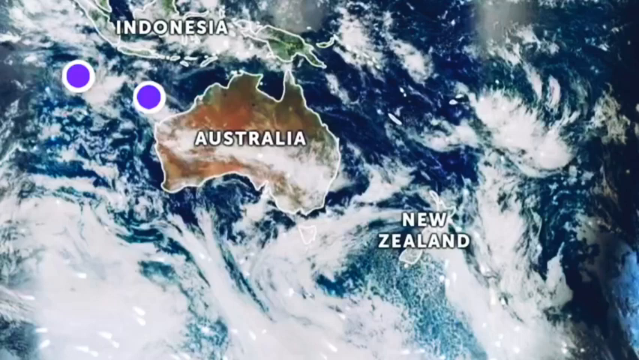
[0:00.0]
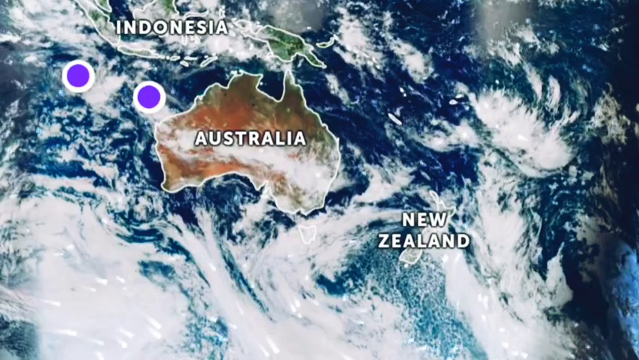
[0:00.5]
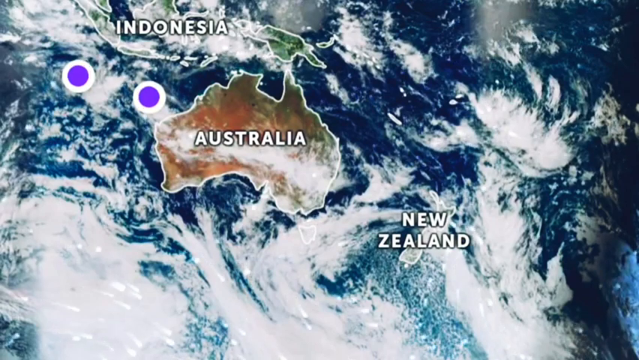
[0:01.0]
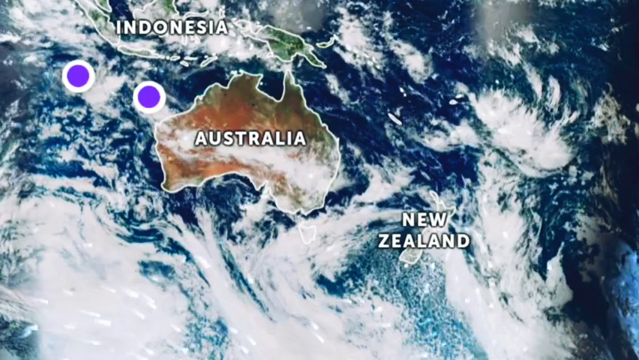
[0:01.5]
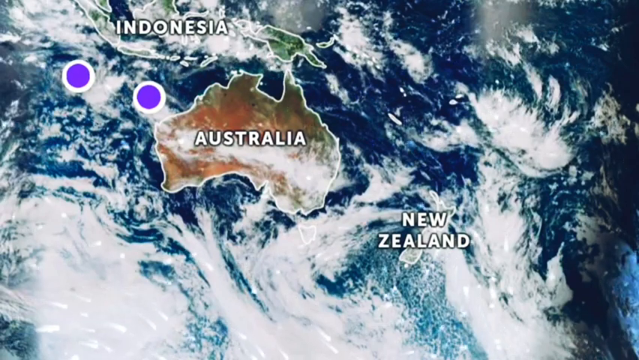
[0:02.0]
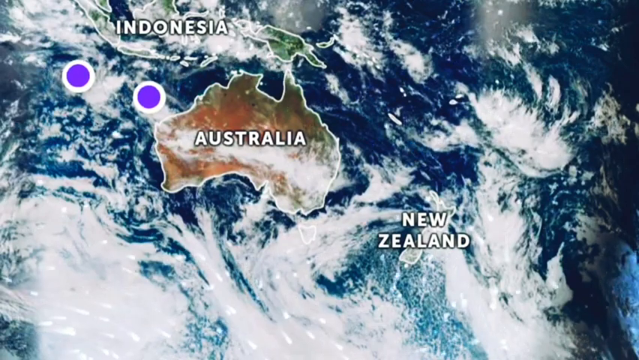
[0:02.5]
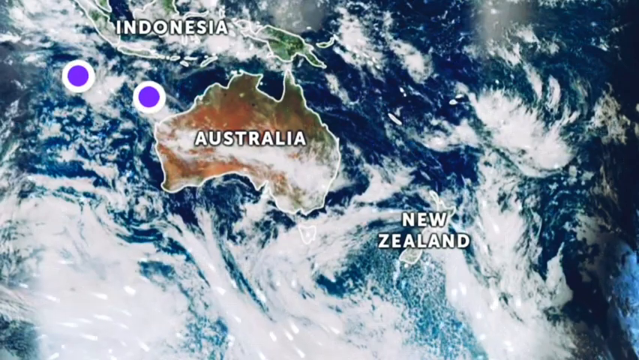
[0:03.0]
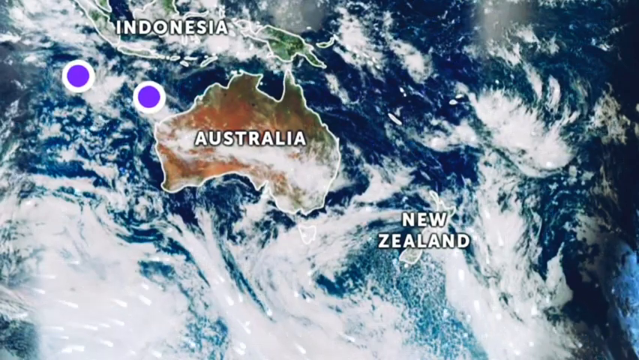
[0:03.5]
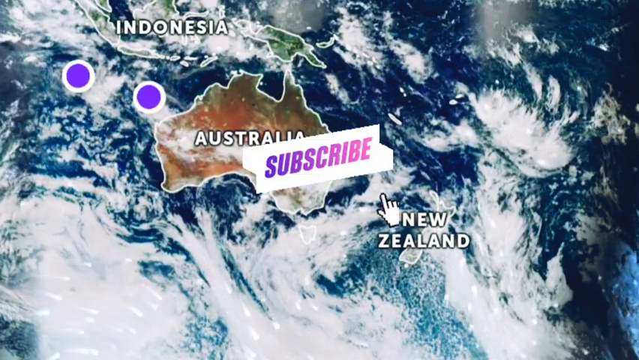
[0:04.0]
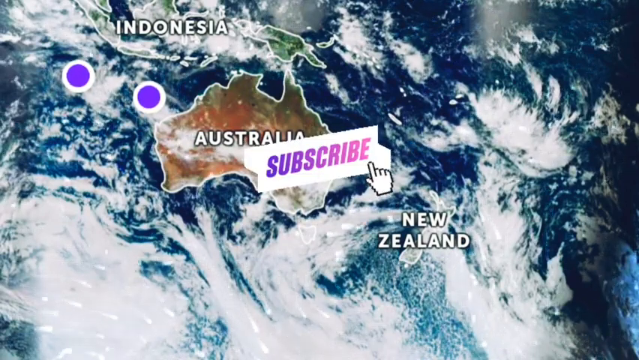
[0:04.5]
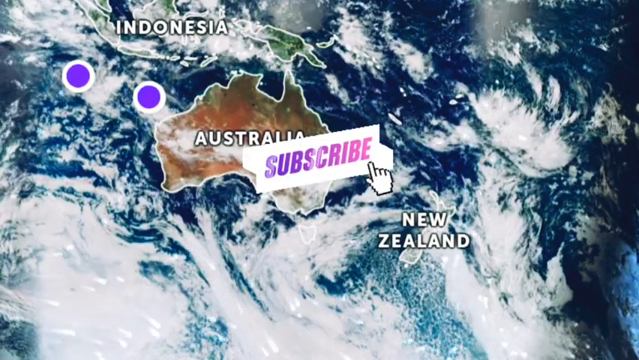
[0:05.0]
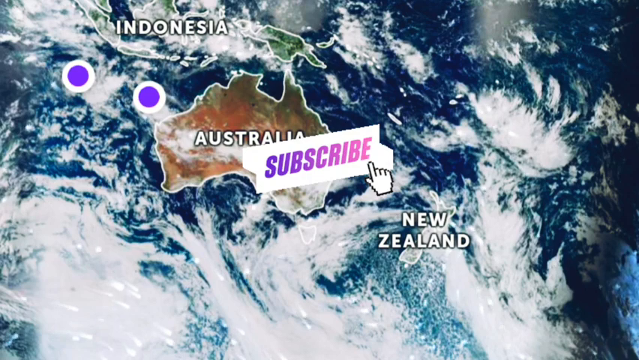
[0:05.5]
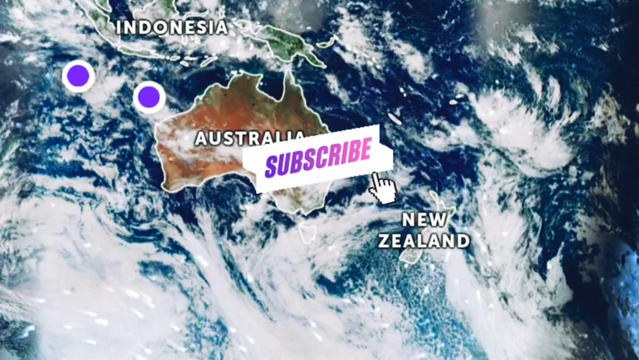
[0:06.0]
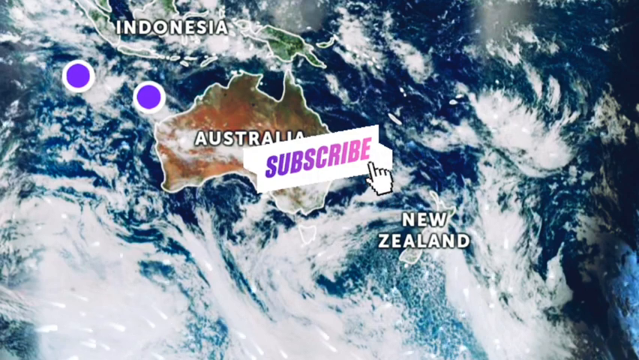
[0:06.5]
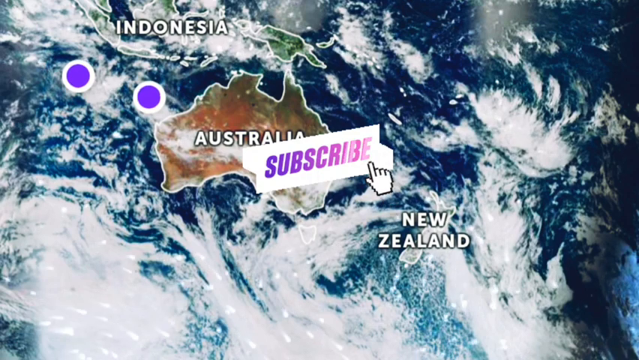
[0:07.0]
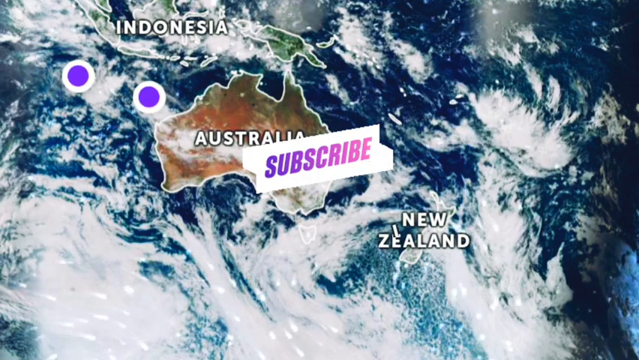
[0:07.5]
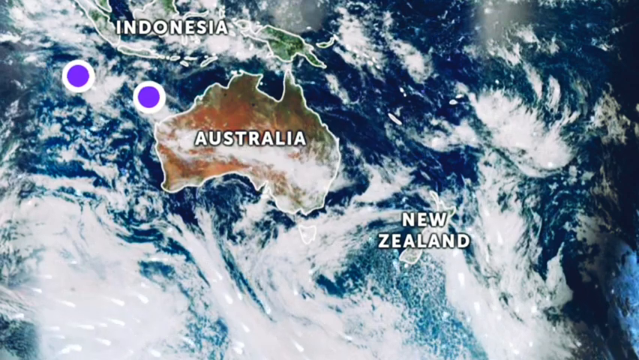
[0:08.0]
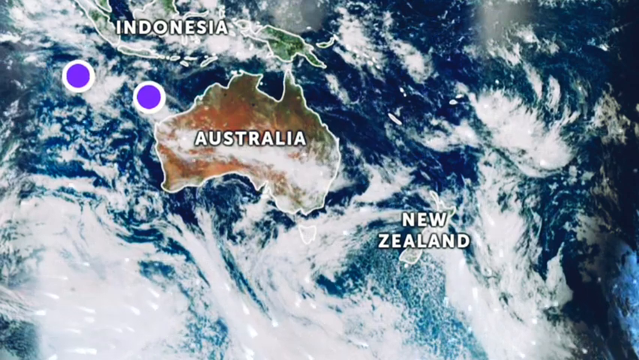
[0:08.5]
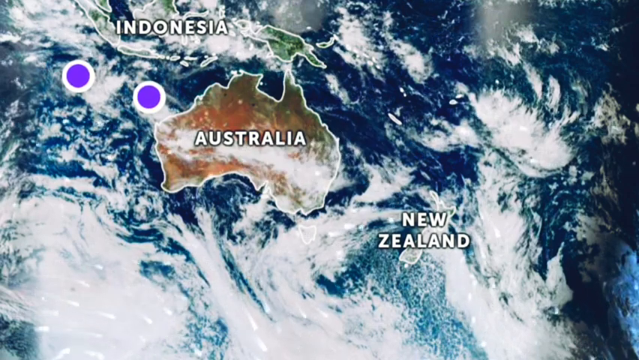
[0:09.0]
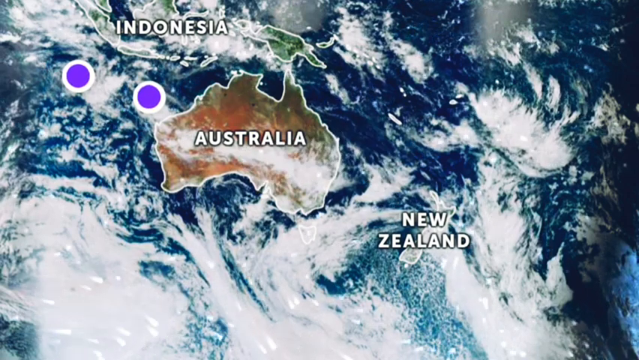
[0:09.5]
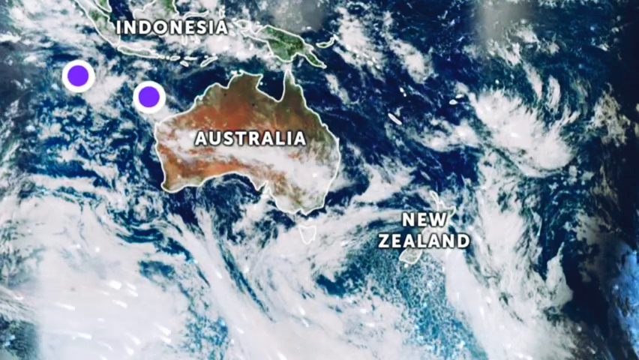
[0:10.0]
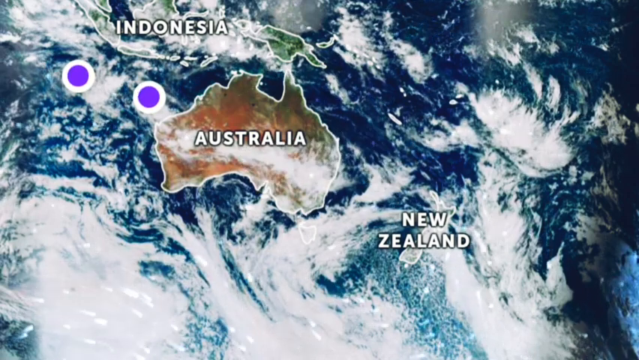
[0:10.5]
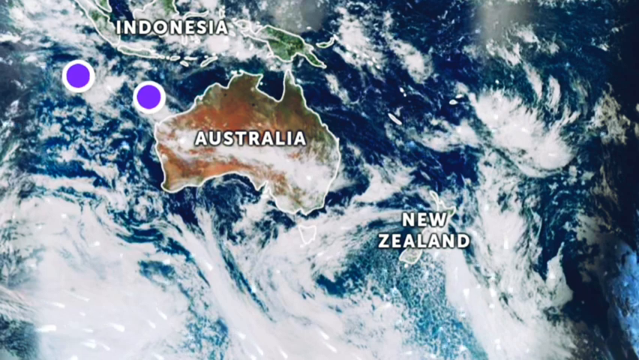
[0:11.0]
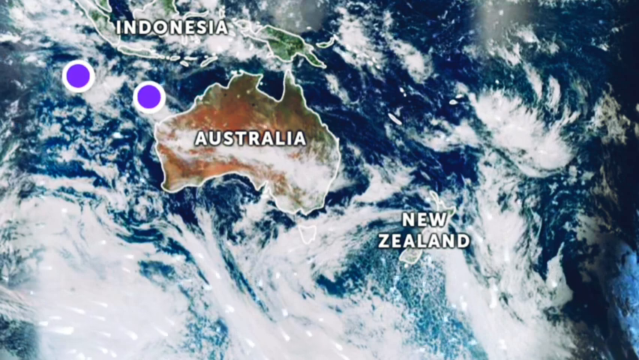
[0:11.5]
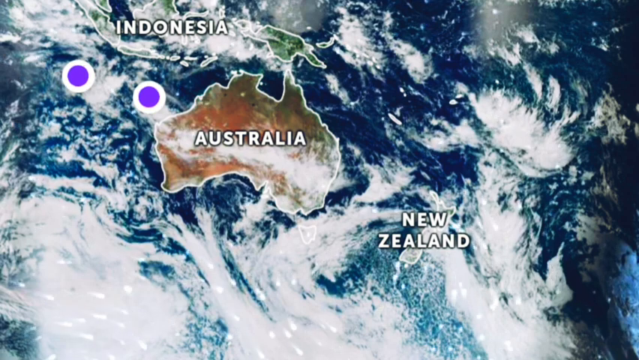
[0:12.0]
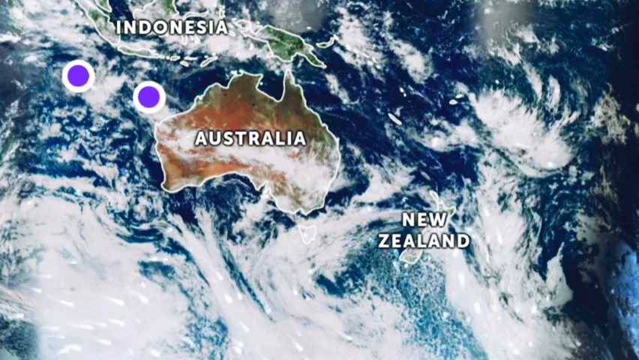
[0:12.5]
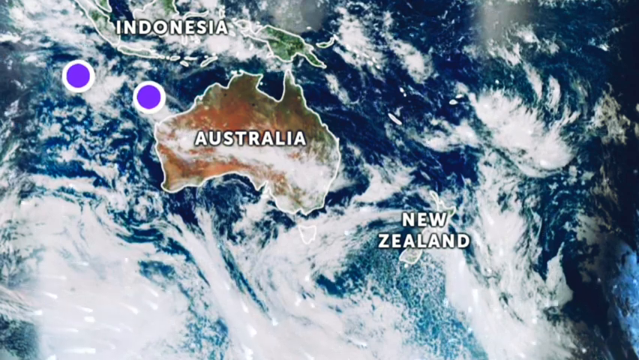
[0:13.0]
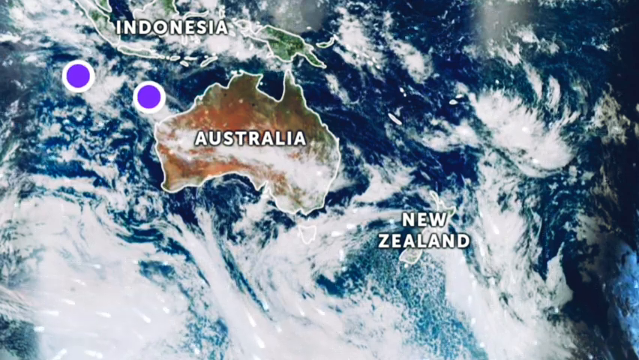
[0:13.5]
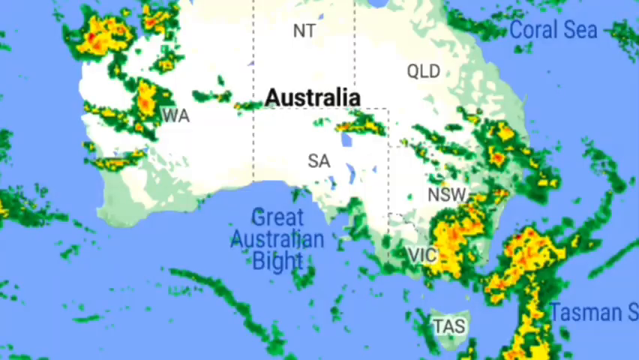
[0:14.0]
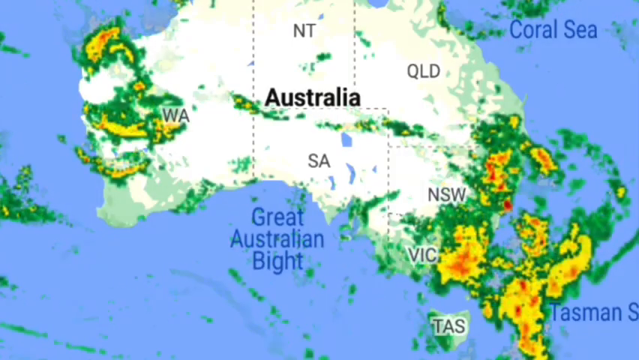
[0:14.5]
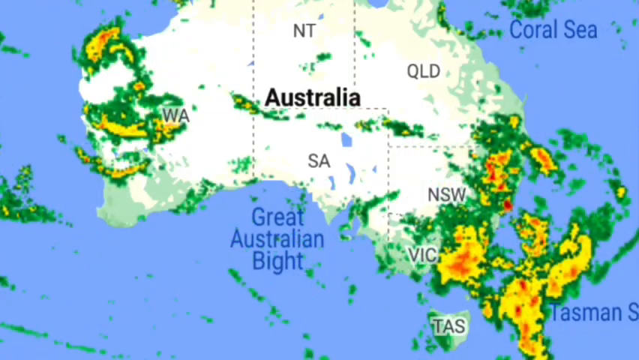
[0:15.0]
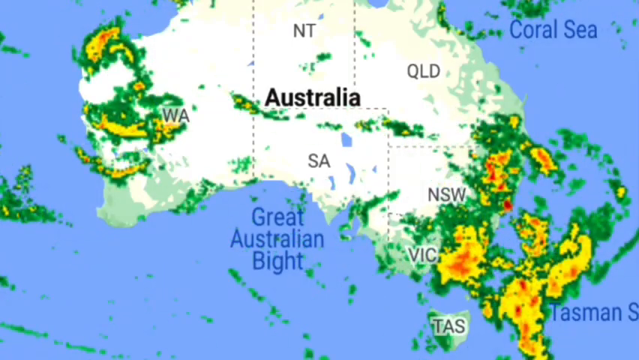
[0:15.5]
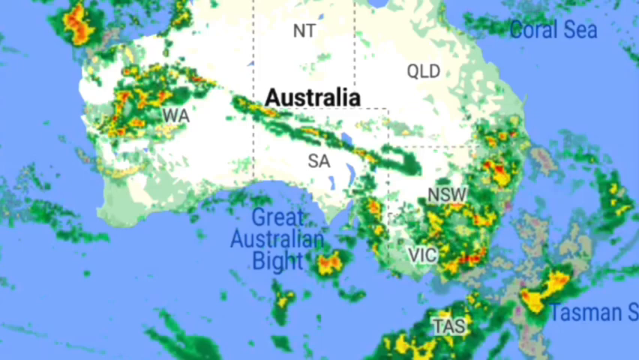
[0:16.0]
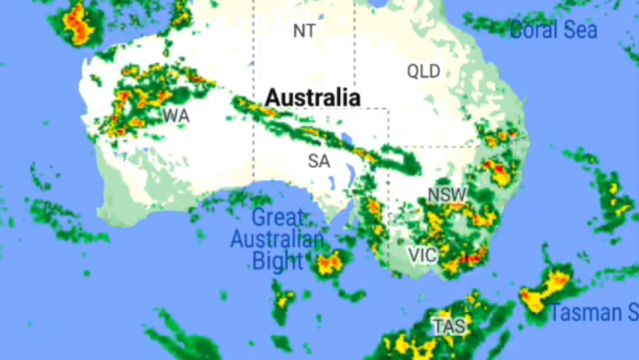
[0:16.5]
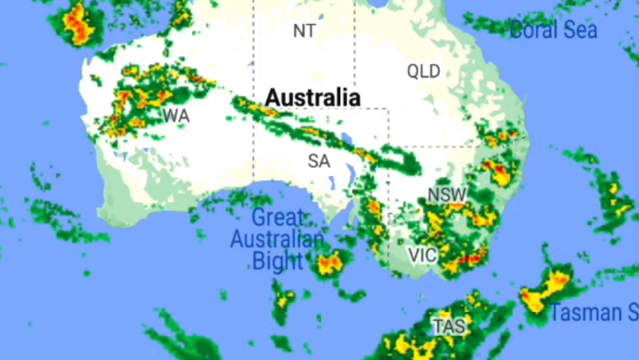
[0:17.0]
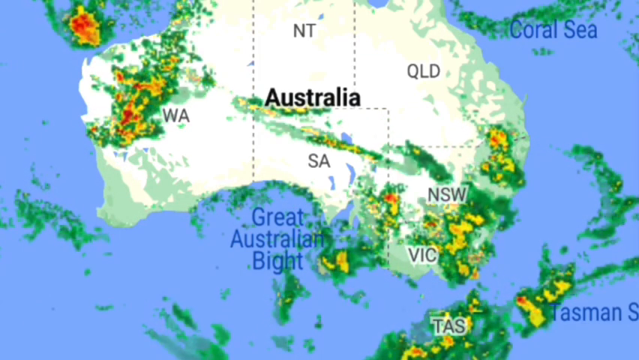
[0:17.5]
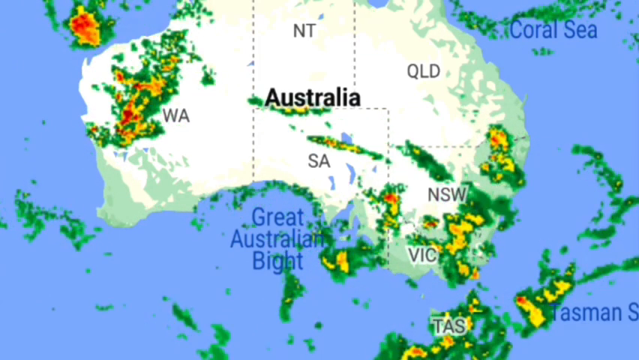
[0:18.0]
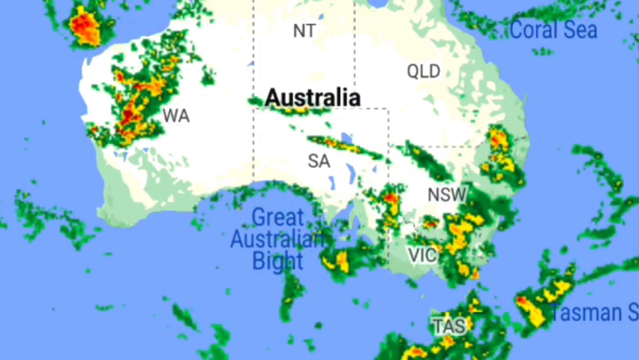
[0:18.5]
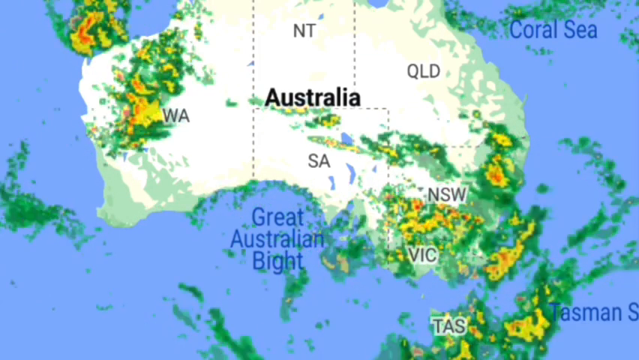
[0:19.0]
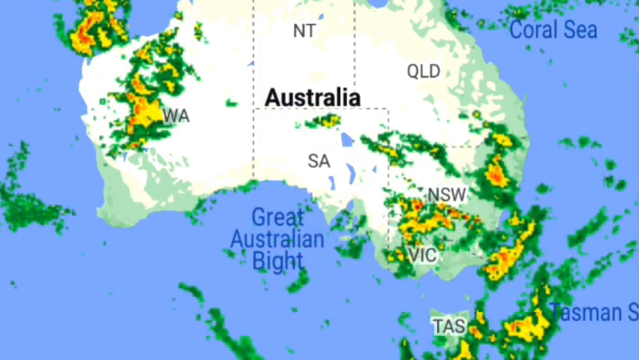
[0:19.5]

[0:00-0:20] A weather map shows a close-up of part of the globe. In the top left corner are landmasses with the word "Indonesia" written across them. In the middle of the screen is Australia, coloured brown, with "Australia" written across it in white. Down to its right is a small landmass with "New Zealand" written over it. Blue surrounds the land, and there are large white splotches of clouds, so all three countries have white and blue around them. Underneath Indonesia are two small purple circles outlined in white. In the middle of the screen the word "subscribe" is written in purple. The video then cuts to a close-up of a different map showing only Australia, which is yellow with the word "Australia" written across it. On the left and right sides of the country are small green, yellow, orange and dark red areas showing the intensities of a storm on the east and west of Australia.